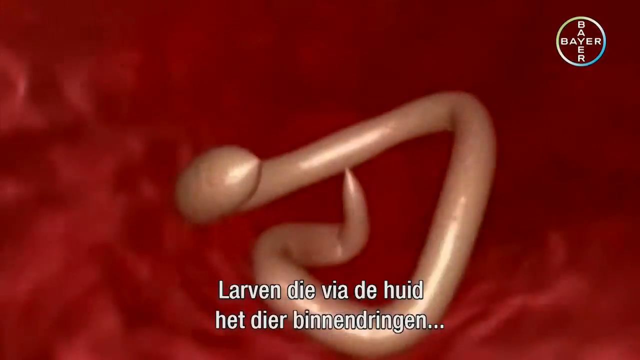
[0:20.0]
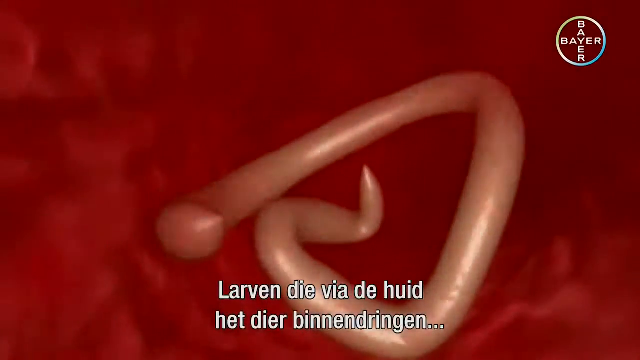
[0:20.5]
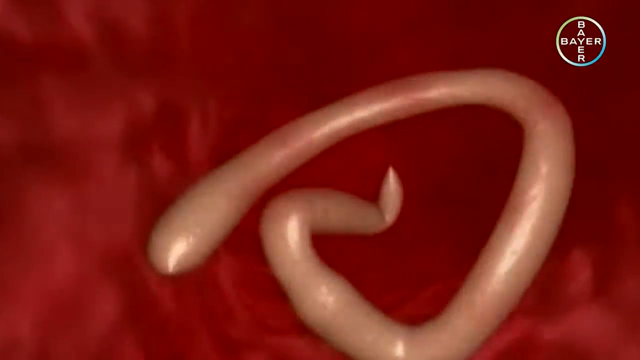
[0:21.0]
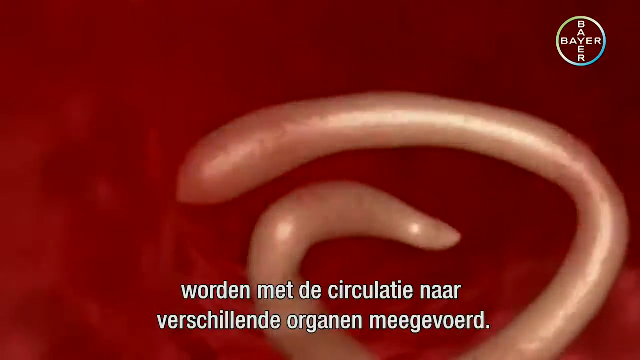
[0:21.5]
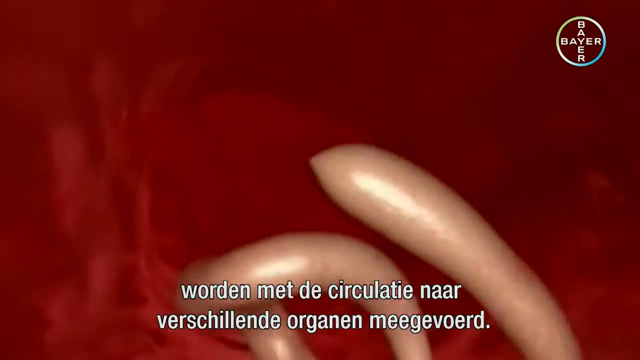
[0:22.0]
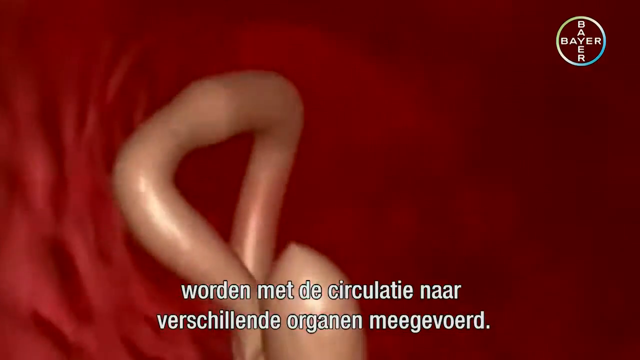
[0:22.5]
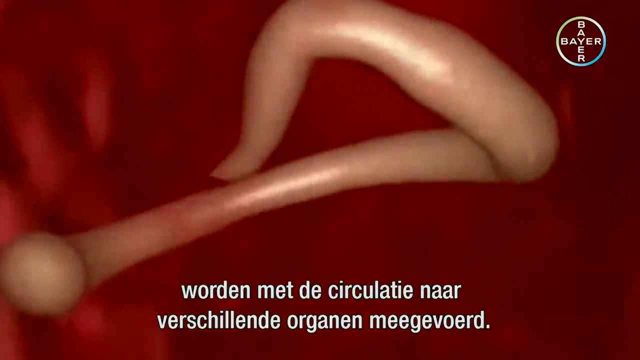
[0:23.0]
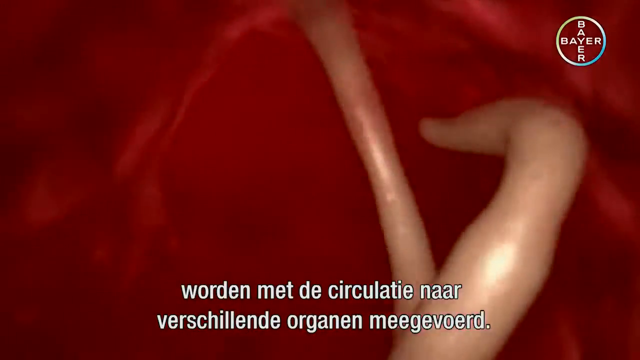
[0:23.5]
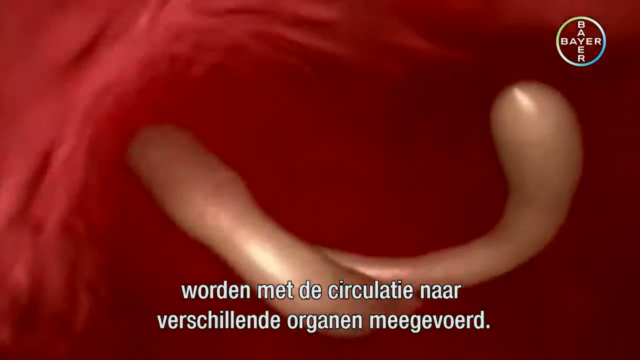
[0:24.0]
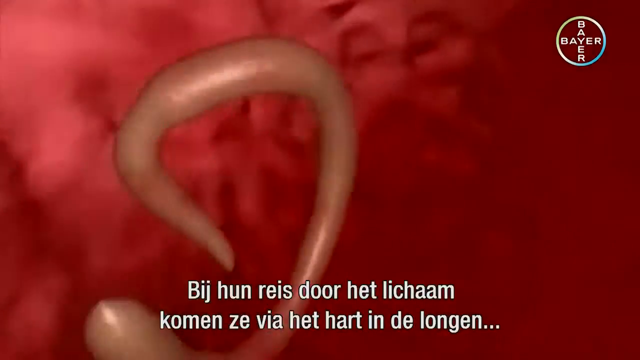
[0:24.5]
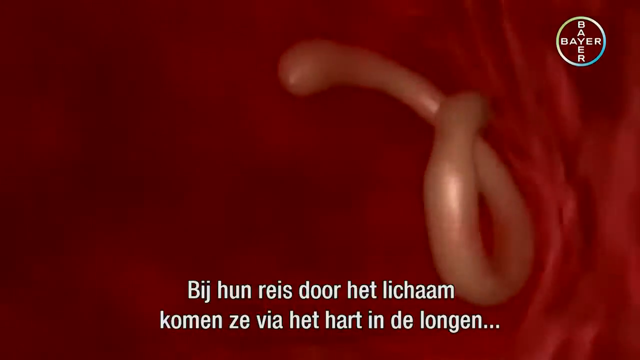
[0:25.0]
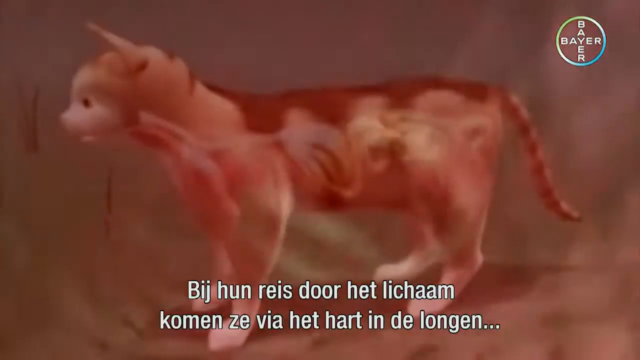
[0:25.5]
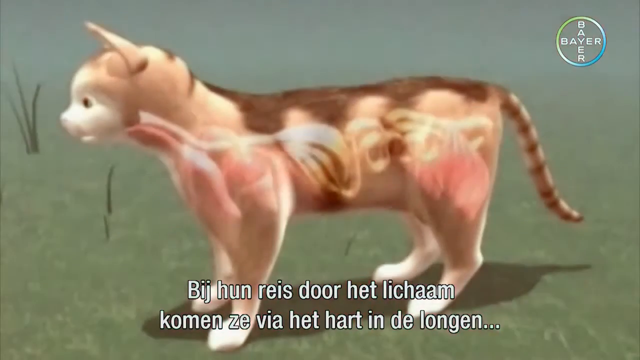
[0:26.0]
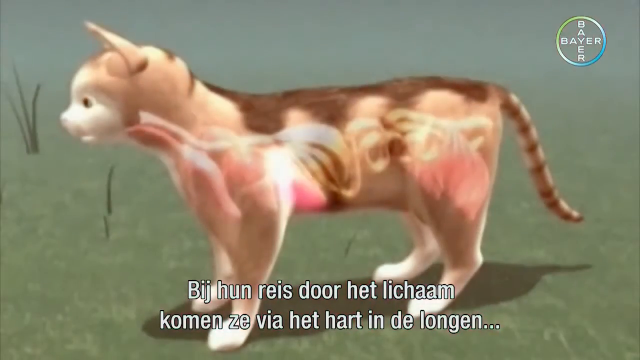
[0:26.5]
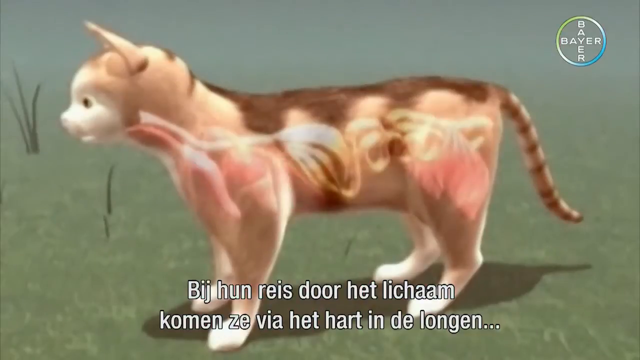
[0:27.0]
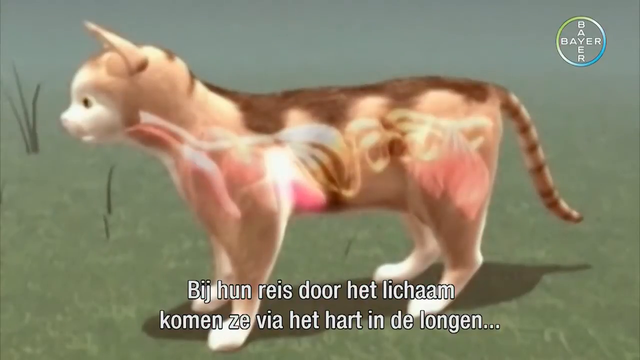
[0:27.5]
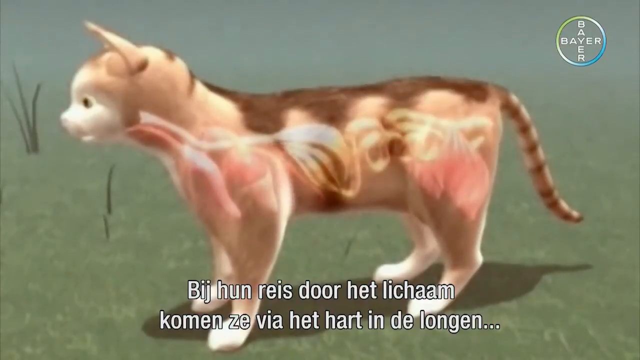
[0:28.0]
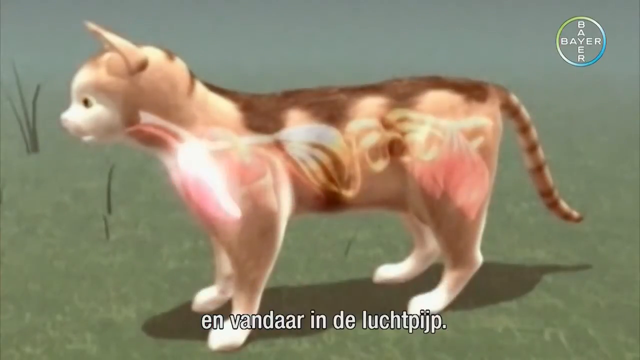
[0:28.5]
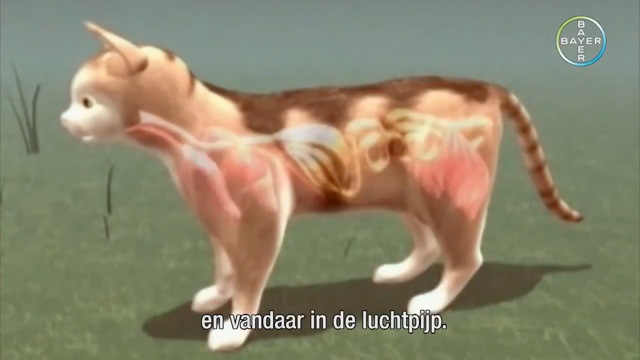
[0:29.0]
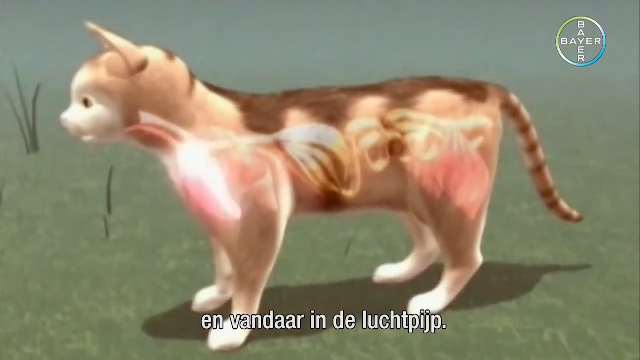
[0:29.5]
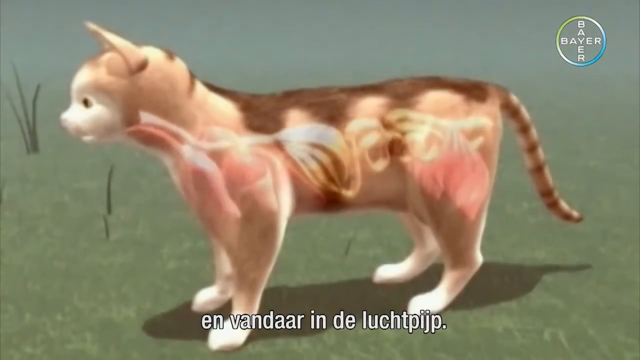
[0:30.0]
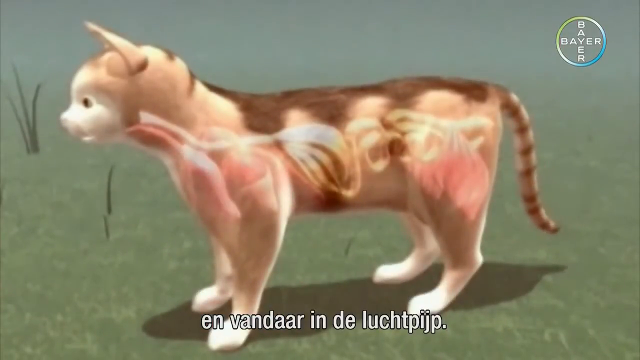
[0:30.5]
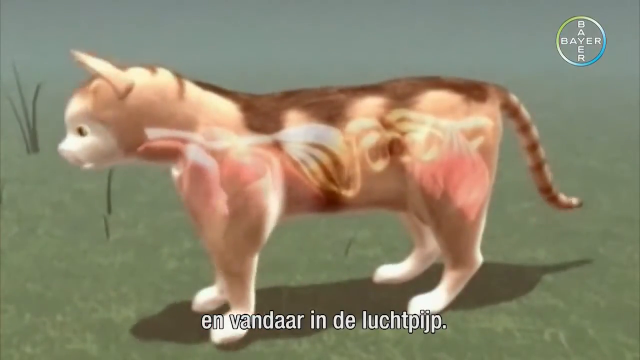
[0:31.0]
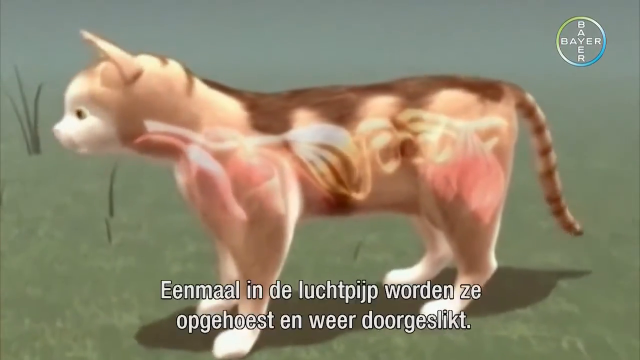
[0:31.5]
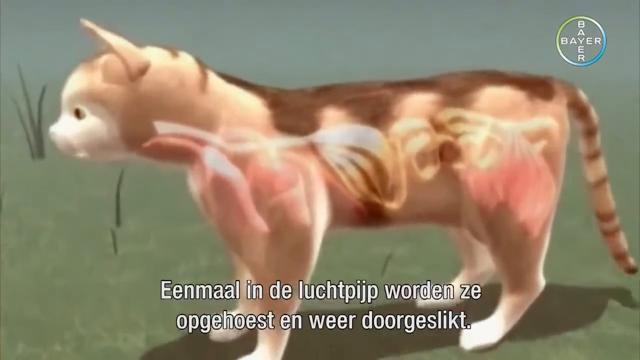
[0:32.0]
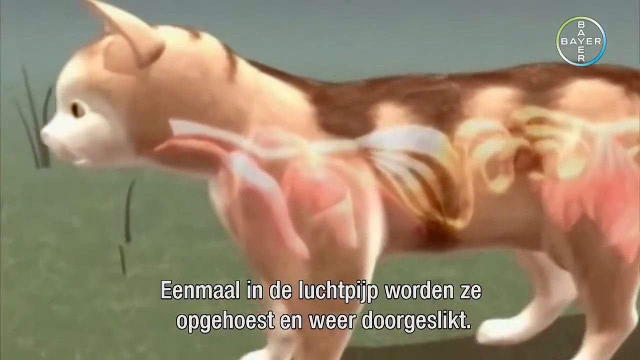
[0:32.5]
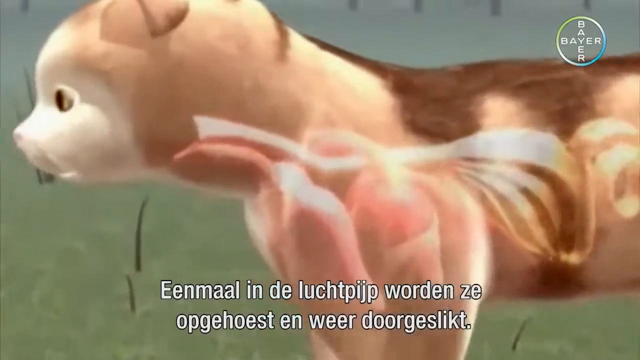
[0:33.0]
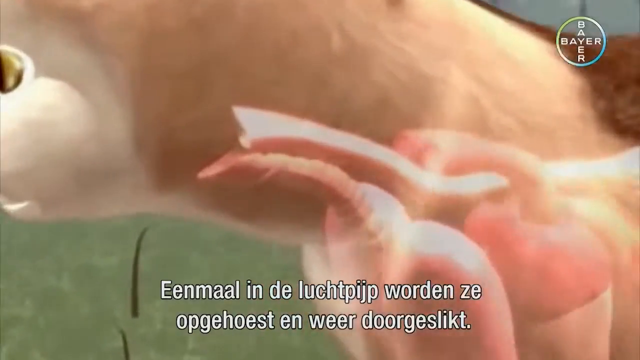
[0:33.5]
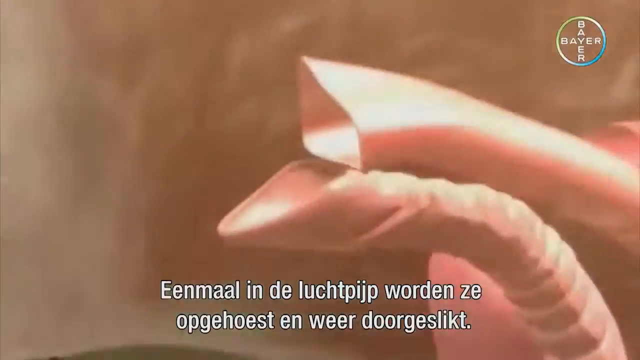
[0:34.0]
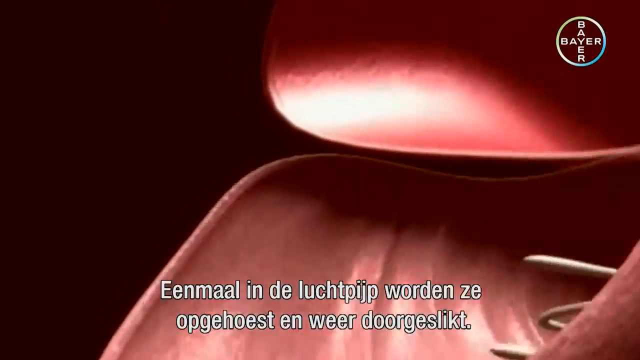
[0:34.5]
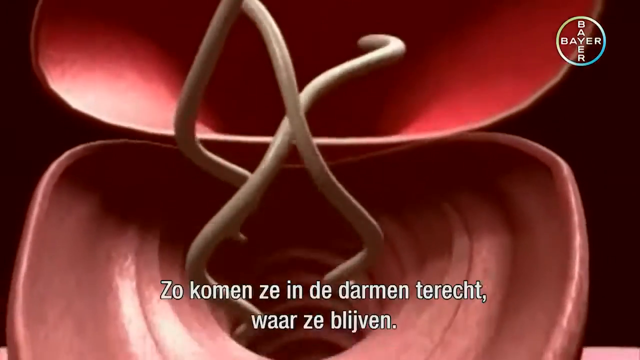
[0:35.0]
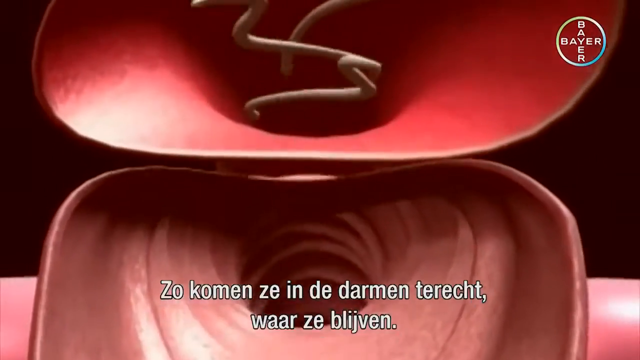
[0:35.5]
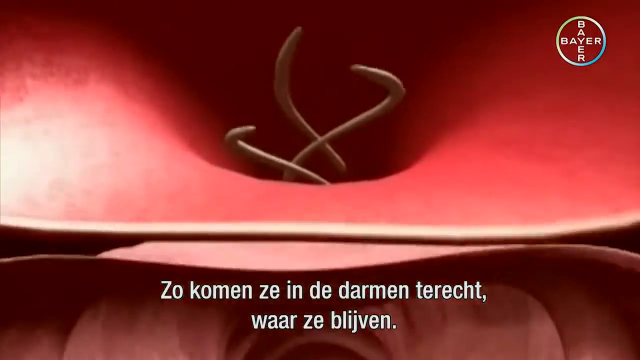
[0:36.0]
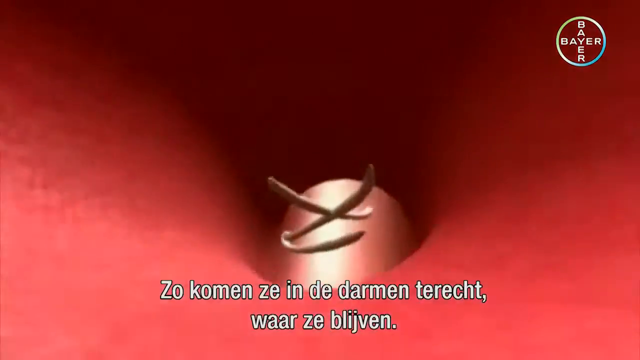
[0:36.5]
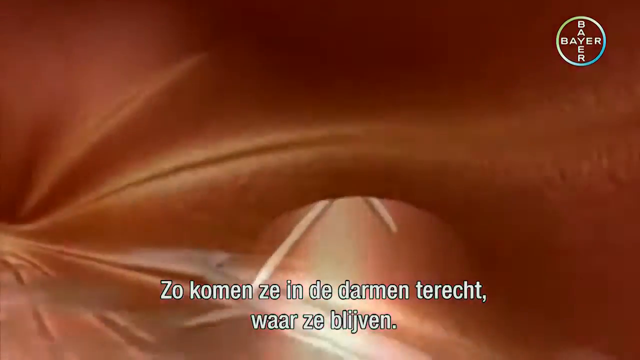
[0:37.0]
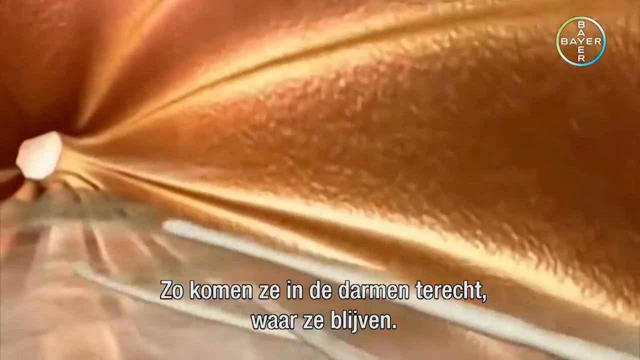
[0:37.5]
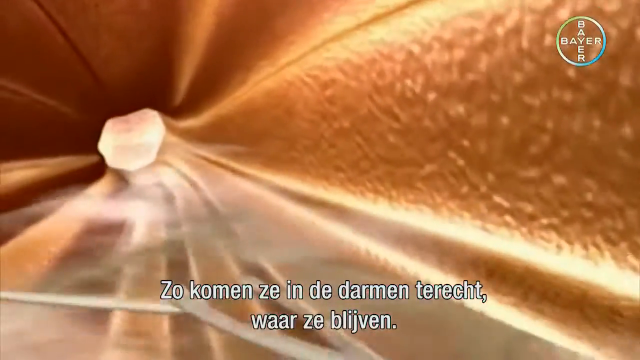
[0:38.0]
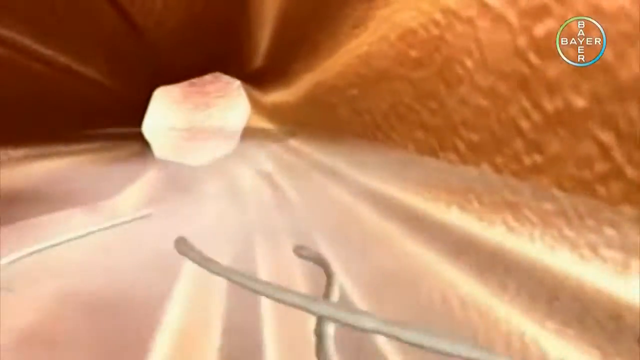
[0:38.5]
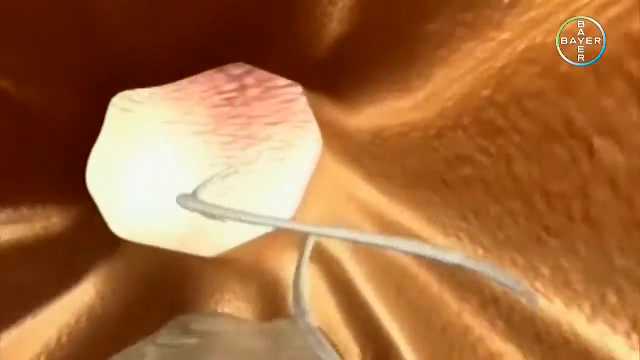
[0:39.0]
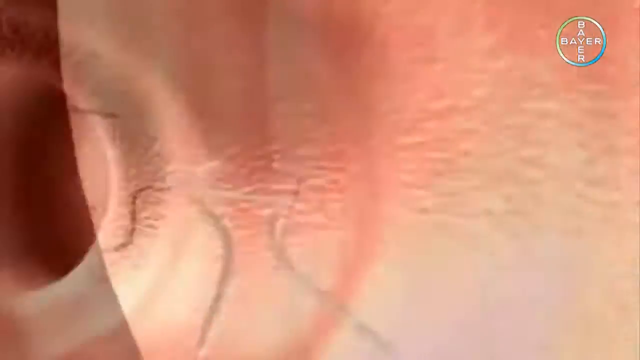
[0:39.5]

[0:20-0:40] Against a red background, some sort of white, worm-like organisms circle around a red area on the screen. White words pop up at the bottom of the screen, and in the upper right corner is a circle with the word "Bayer" in a crisscross pattern. The white organisms go down a red tunnel, then an image of a cat pops up, with one area of its body seemingly glowing. The cat begins to cough, and some of the white organisms seem to travel further down into the cat's internal body.